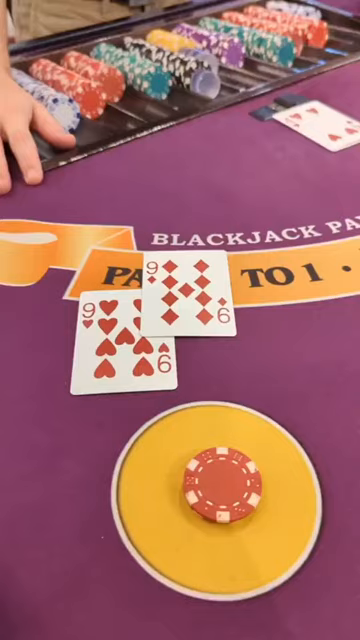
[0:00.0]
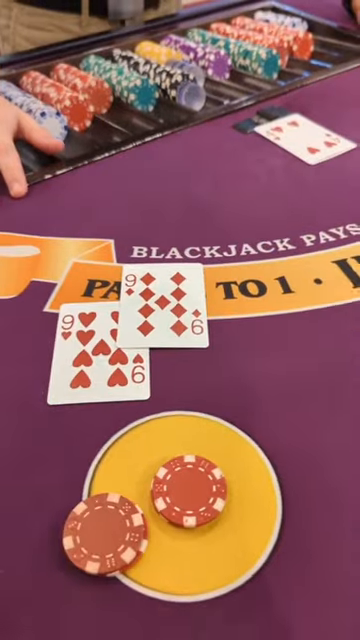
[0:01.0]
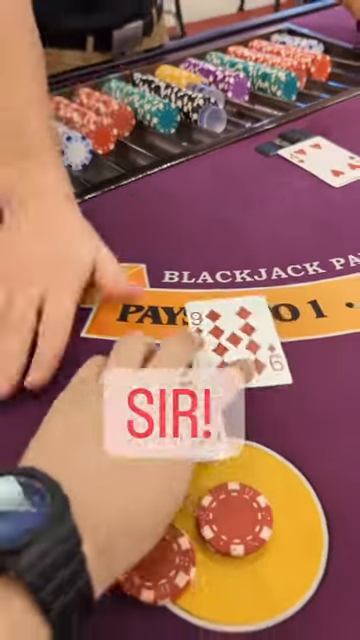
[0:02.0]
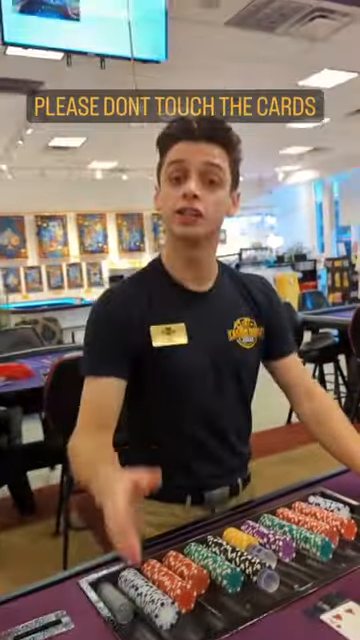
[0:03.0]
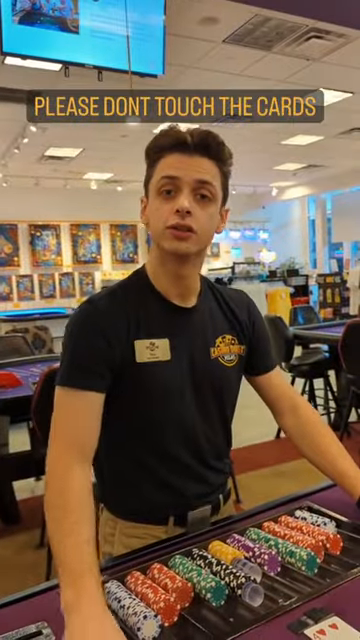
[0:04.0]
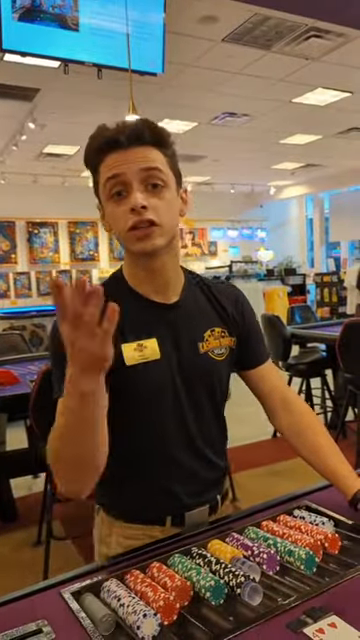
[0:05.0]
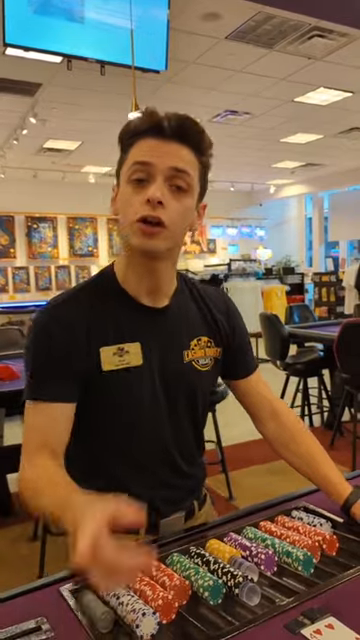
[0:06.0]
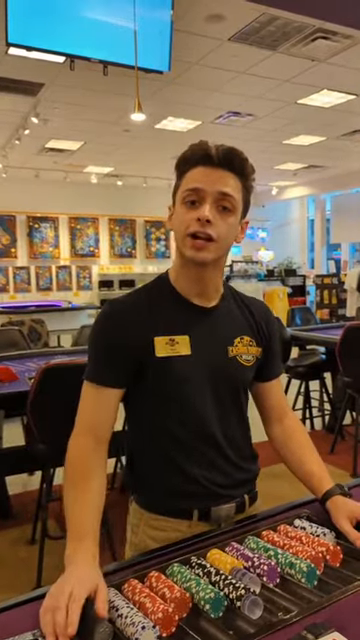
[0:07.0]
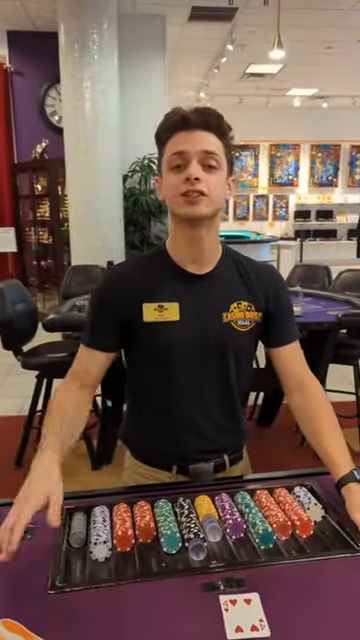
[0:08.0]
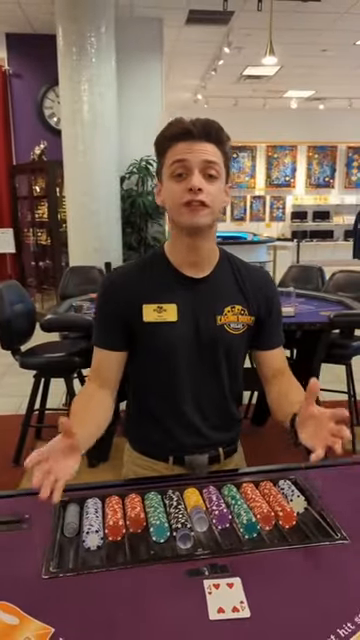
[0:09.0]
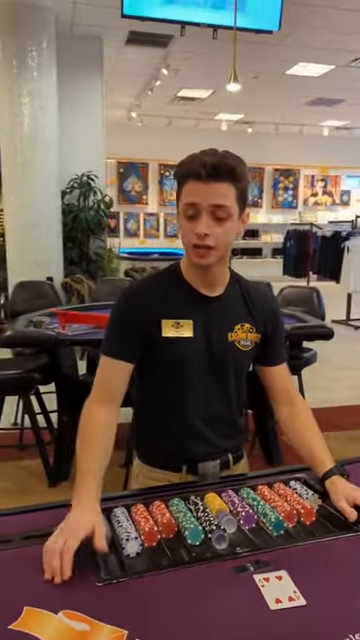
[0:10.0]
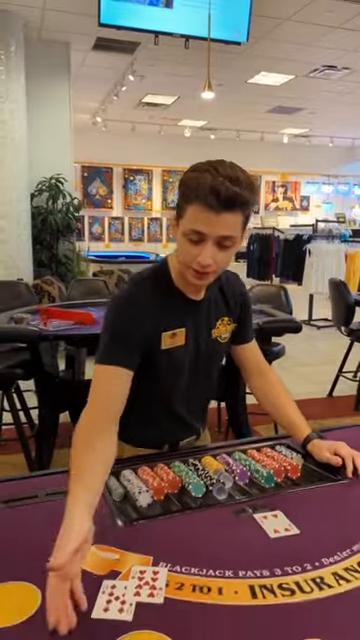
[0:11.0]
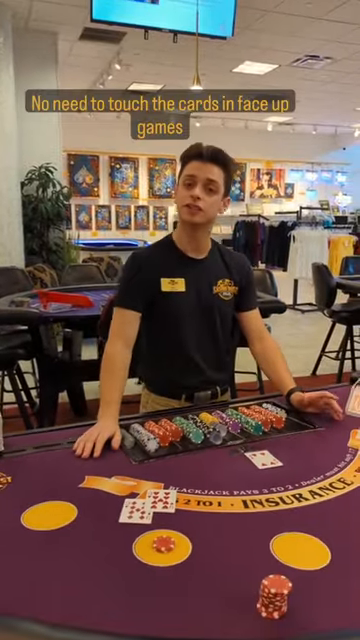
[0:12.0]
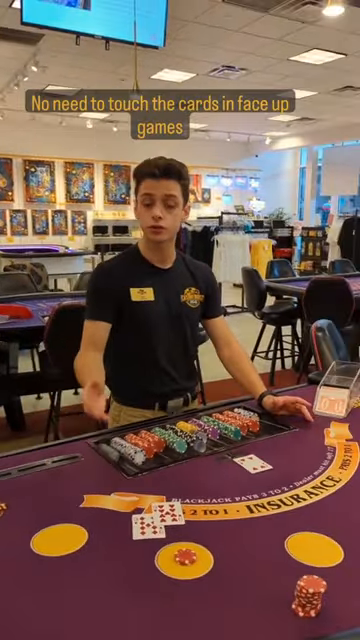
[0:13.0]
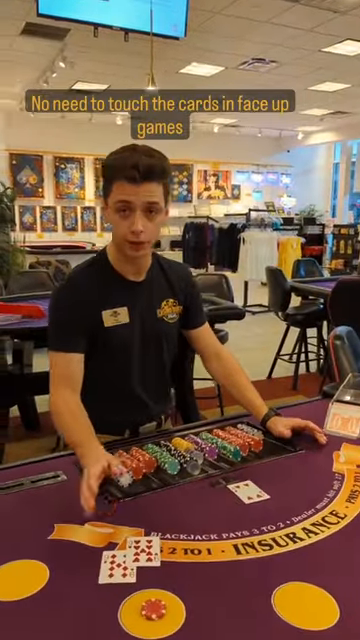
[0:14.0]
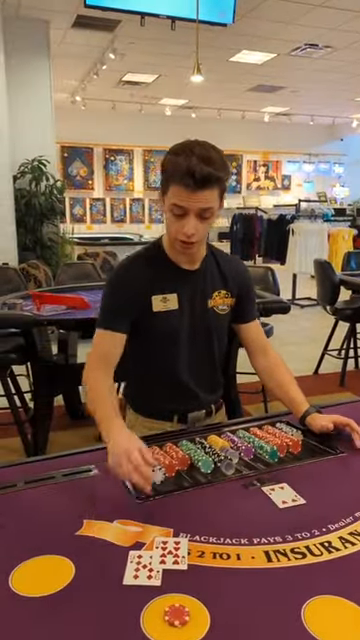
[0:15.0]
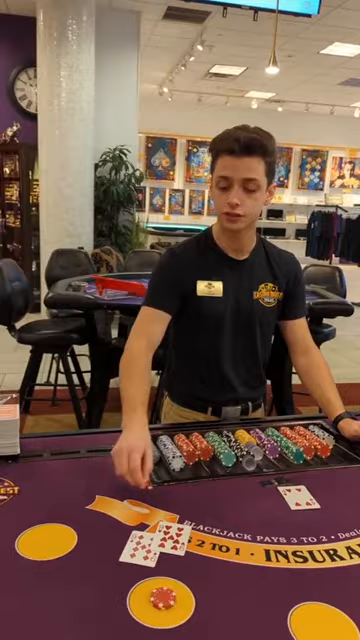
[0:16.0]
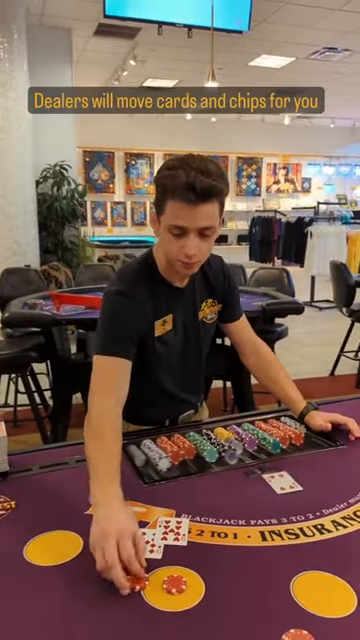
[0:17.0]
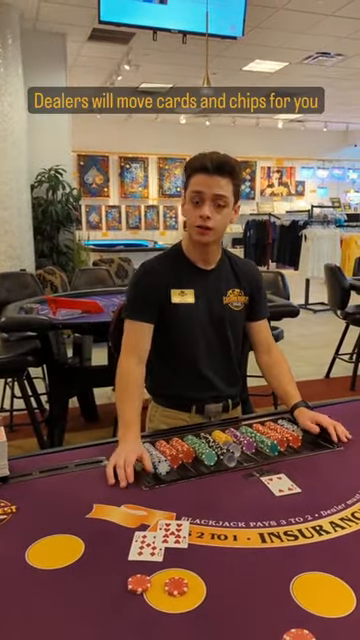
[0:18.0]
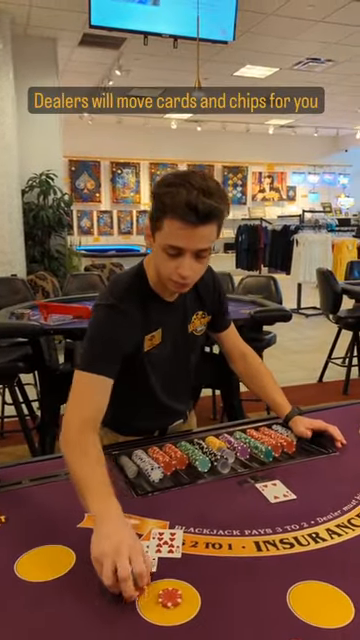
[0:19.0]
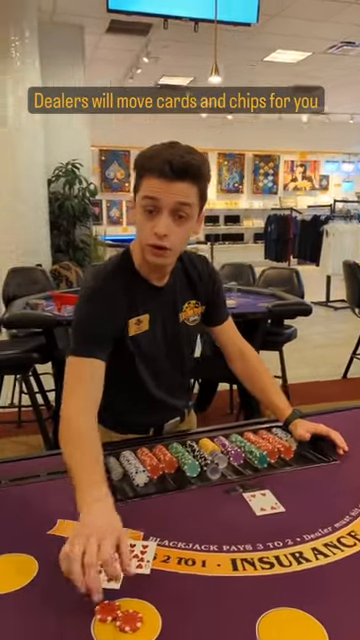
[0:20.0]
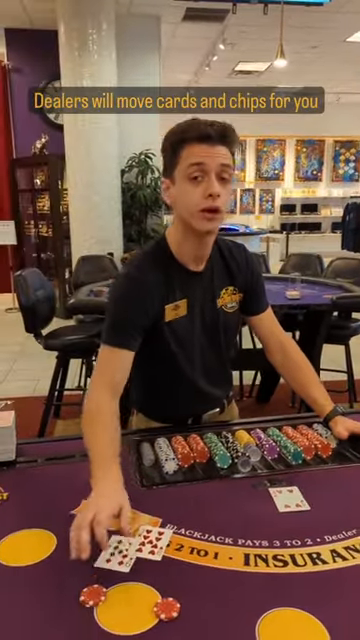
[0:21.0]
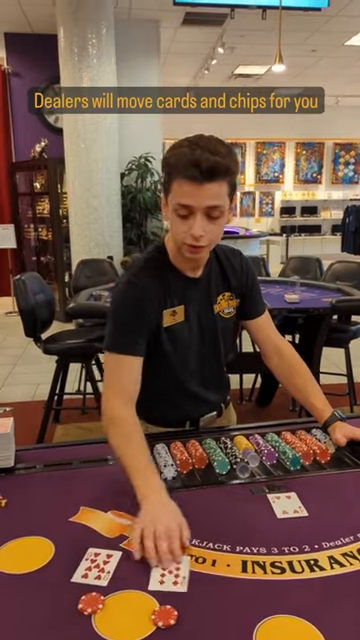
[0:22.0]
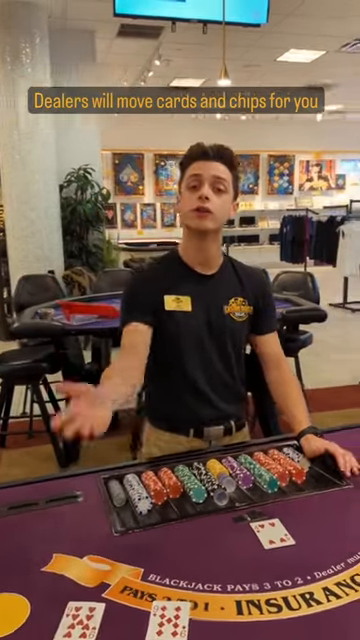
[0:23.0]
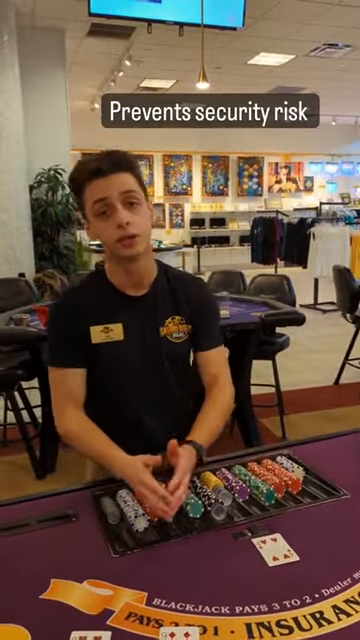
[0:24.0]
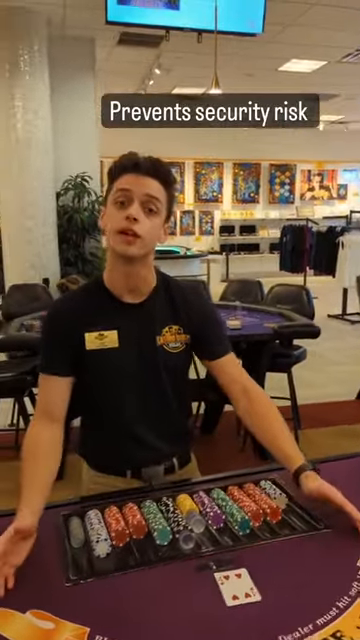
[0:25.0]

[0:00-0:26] The setting appears to be the inside of a casino, at a game of Blackjack. A man is talking, and he is possibly showing some tricks or behind-the-scenes details of Blackjack. The footage seems to be filmed from the first-person point of view of the person holding the camera, who touches a card. Subtitles then appear on the screen saying "don't touch the cards," apparently referring to the dealer's cards. The video may be about casino etiquette, possibly the do's and don'ts of Blackjack.